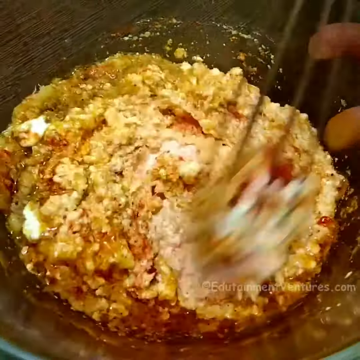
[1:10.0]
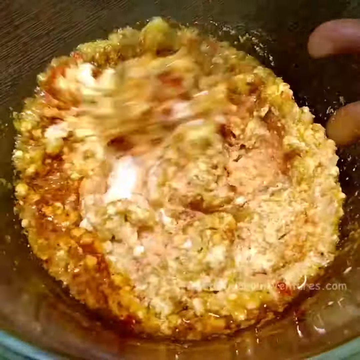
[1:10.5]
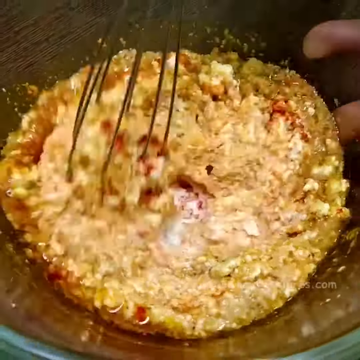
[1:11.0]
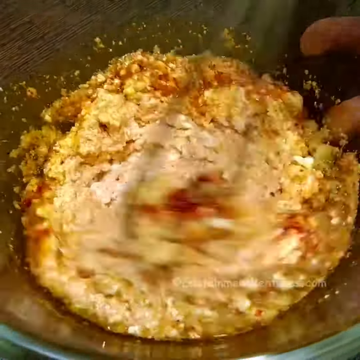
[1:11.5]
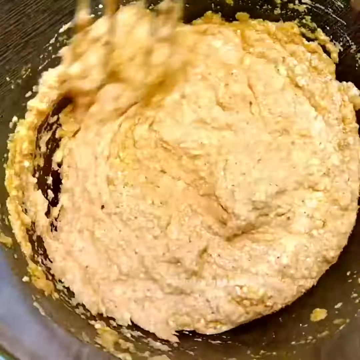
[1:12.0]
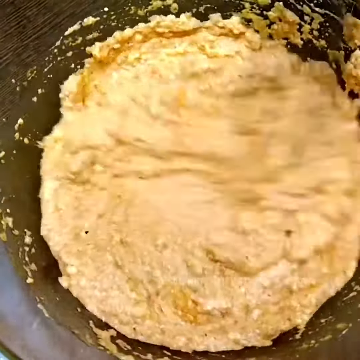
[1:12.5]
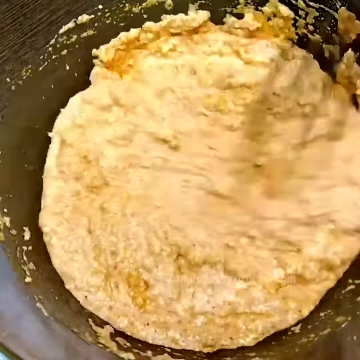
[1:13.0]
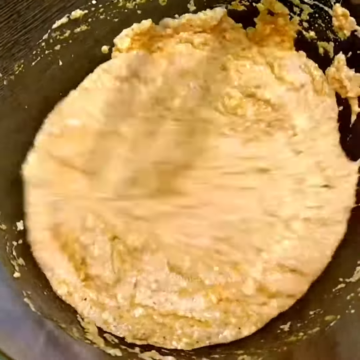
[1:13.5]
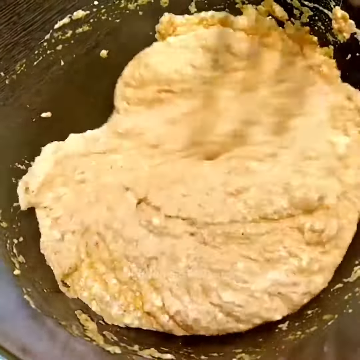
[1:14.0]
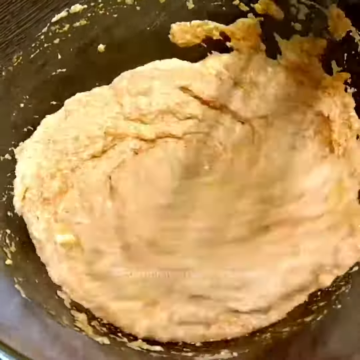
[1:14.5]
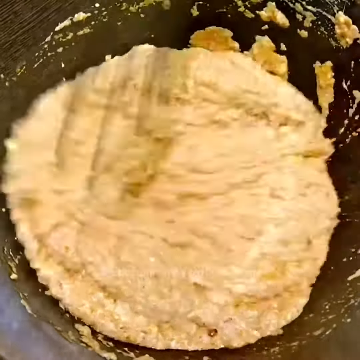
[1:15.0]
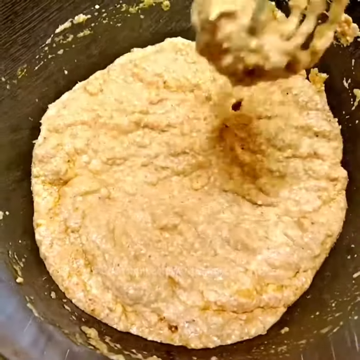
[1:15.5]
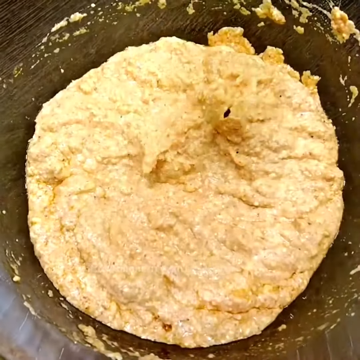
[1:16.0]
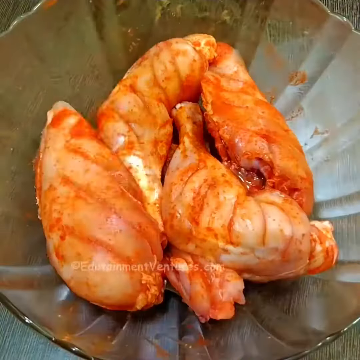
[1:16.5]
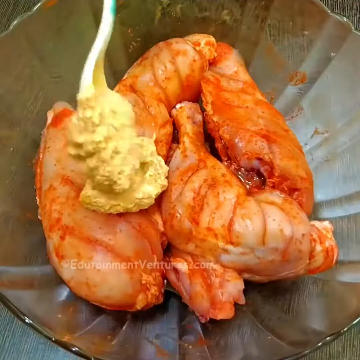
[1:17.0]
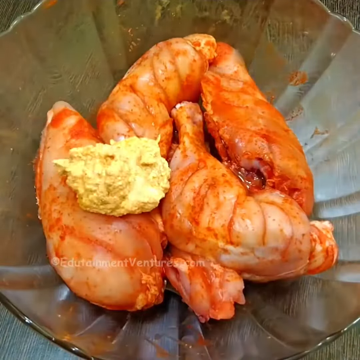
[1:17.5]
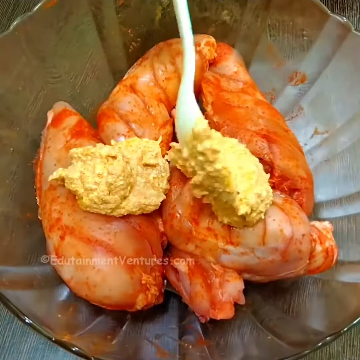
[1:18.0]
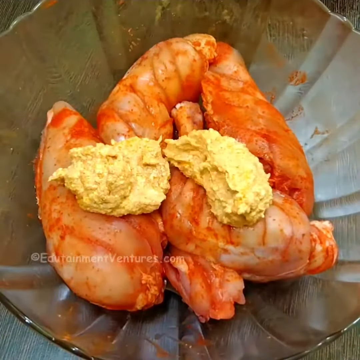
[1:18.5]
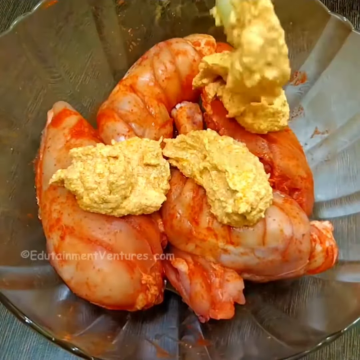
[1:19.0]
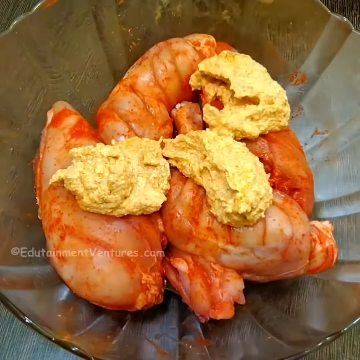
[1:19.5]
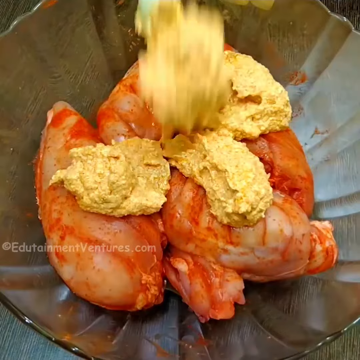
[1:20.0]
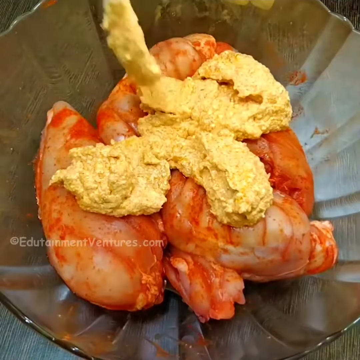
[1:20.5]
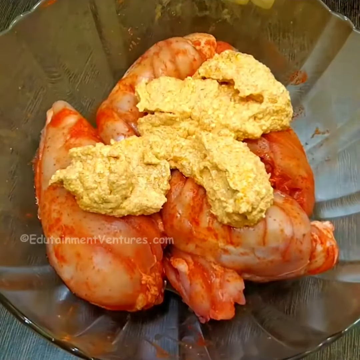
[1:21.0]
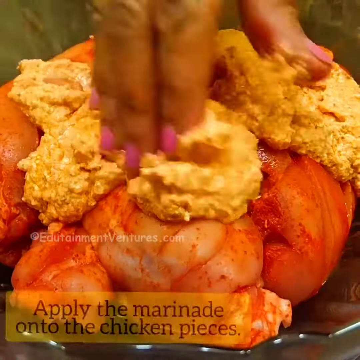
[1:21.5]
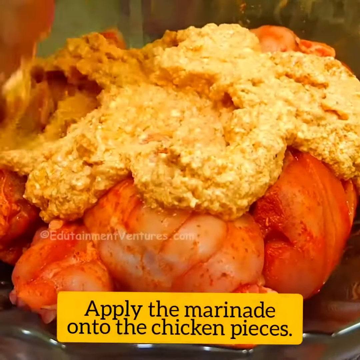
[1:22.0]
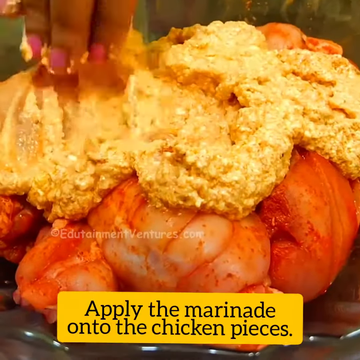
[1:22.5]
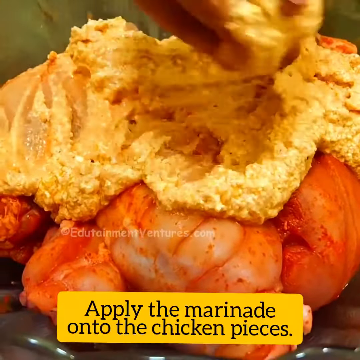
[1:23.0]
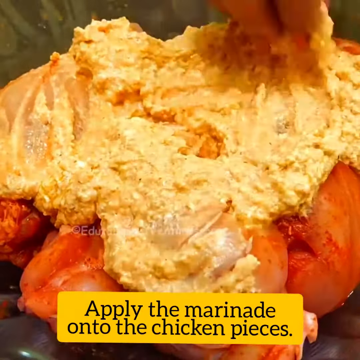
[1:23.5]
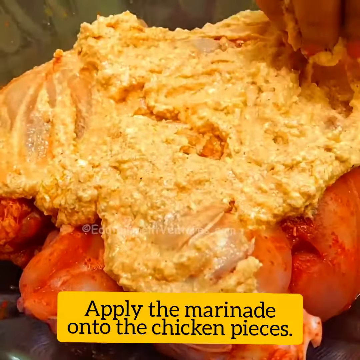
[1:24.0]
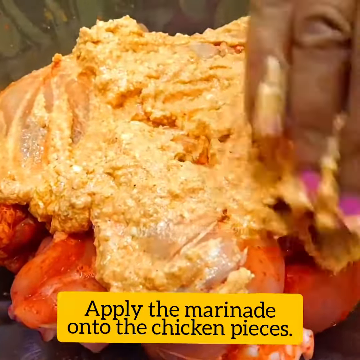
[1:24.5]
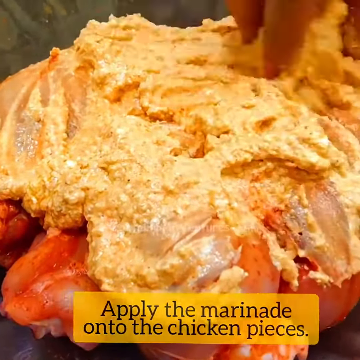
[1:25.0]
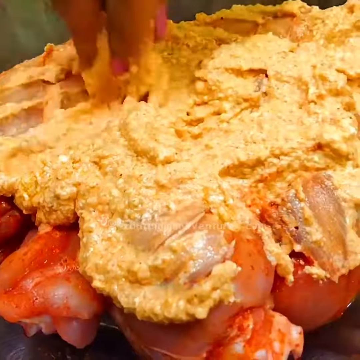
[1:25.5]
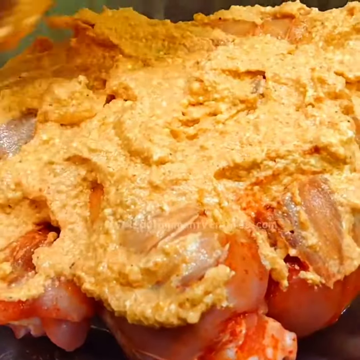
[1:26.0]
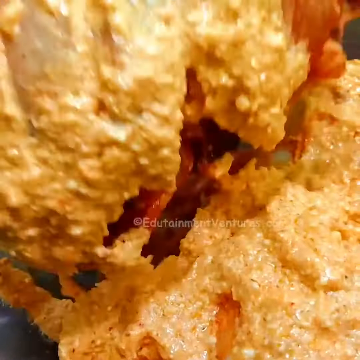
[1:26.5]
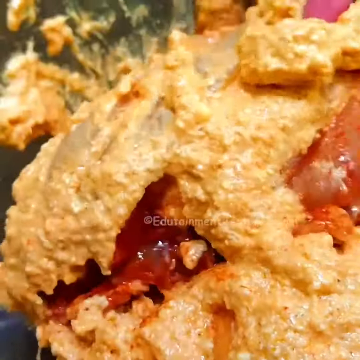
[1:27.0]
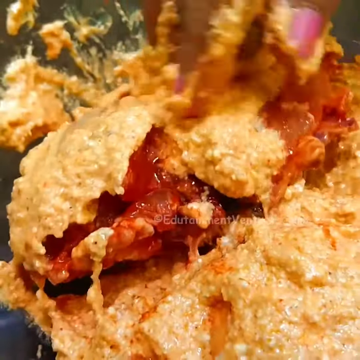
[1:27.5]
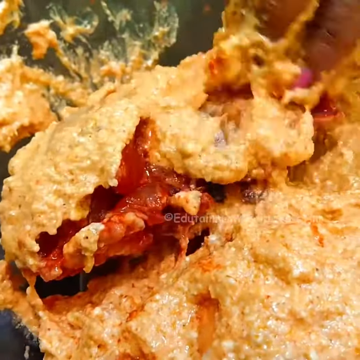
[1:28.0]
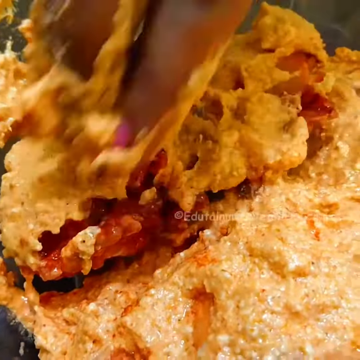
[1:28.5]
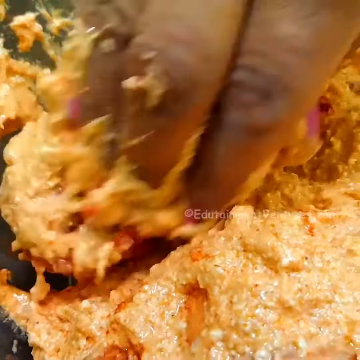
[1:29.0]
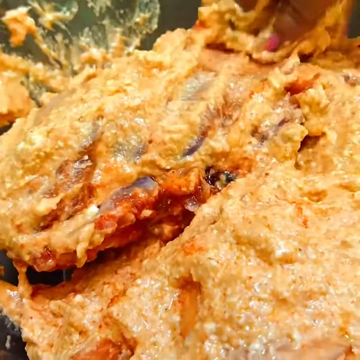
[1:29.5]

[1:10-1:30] A person with a whisk mixes the green mixture together. As it becomes more thoroughly mixed, it is less green and more white, with a thick consistency similar to whisked yogurt. In the next scene the mixture is scooped onto the chicken, which already has the red oil on it, in four scoops. Text at the bottom reads "apply the marinade onto the chicken pieces". Someone with bare hands and long pink fingernails rubs it onto the chicken, covering as much as possible, then picks up pieces one at a time to rub the backs of them with the marinade too. The yogurt marinade is still white.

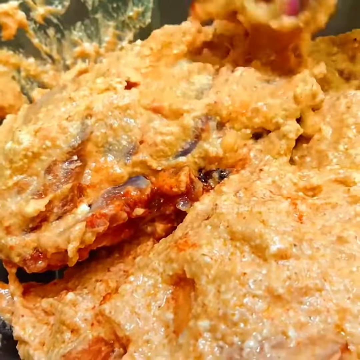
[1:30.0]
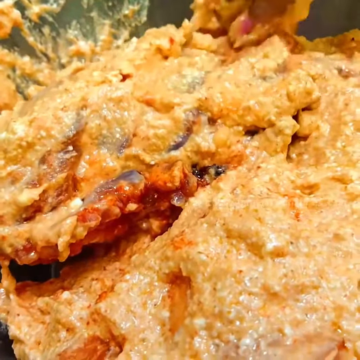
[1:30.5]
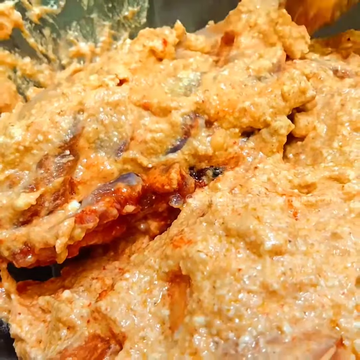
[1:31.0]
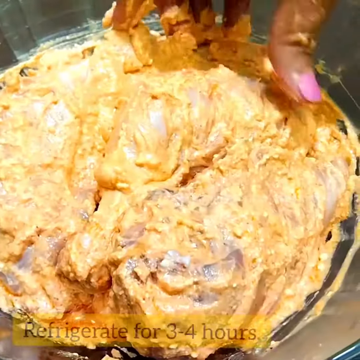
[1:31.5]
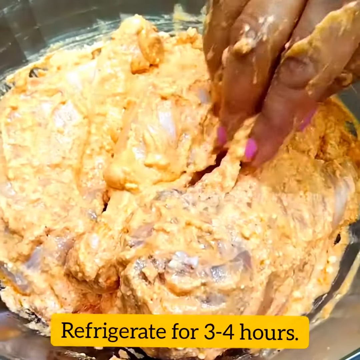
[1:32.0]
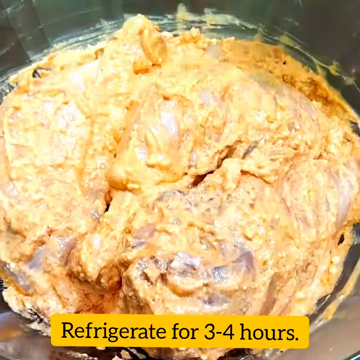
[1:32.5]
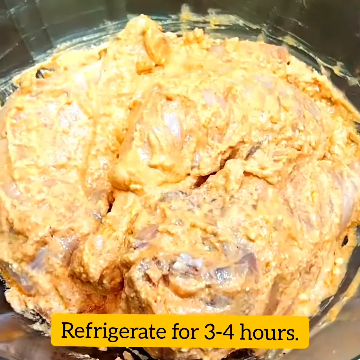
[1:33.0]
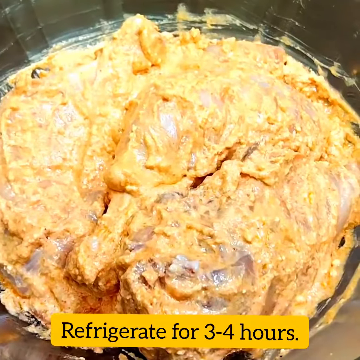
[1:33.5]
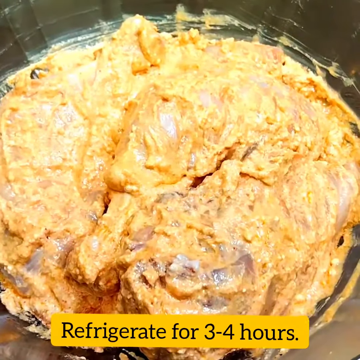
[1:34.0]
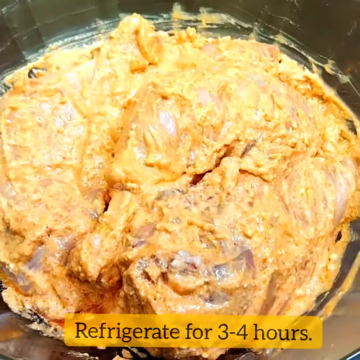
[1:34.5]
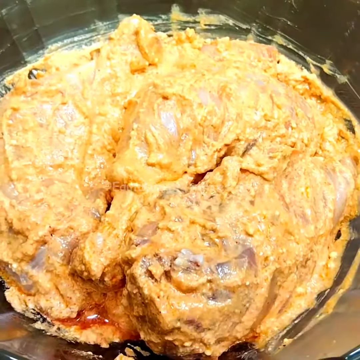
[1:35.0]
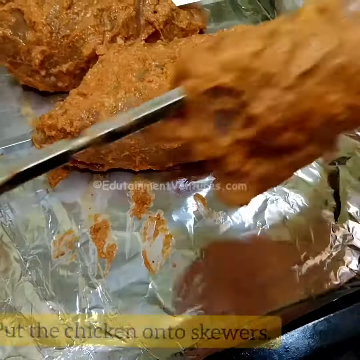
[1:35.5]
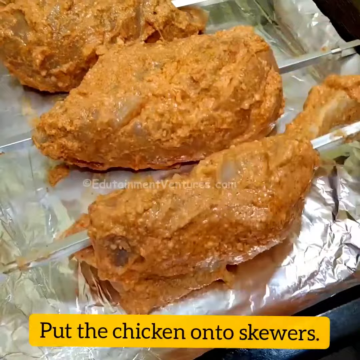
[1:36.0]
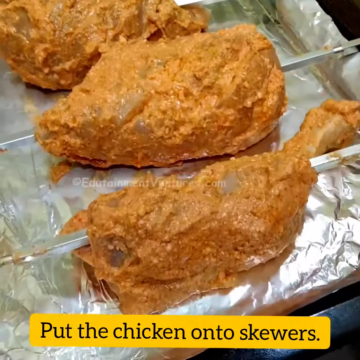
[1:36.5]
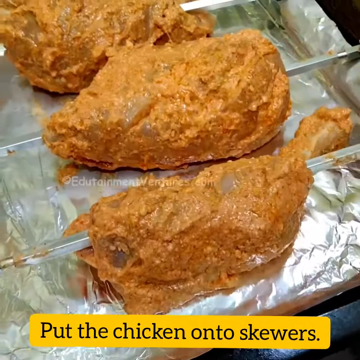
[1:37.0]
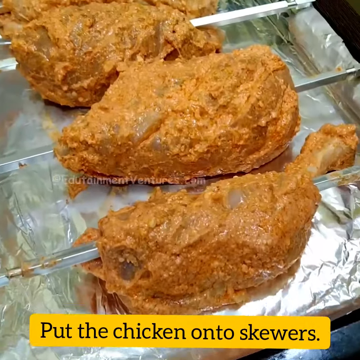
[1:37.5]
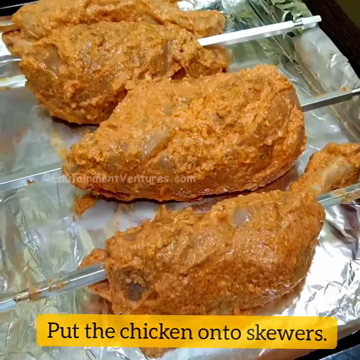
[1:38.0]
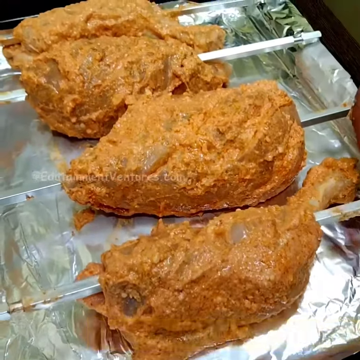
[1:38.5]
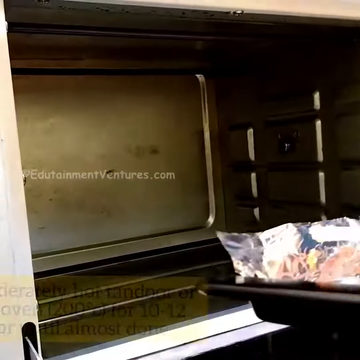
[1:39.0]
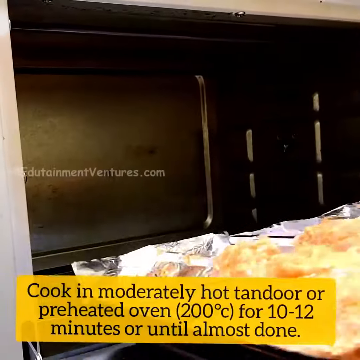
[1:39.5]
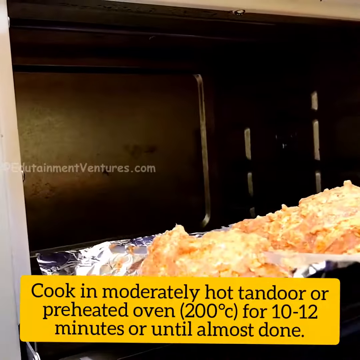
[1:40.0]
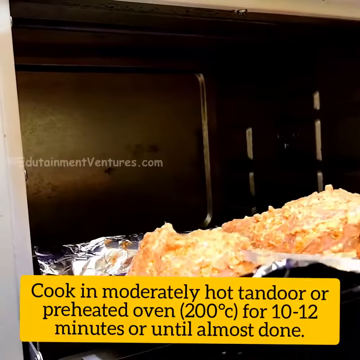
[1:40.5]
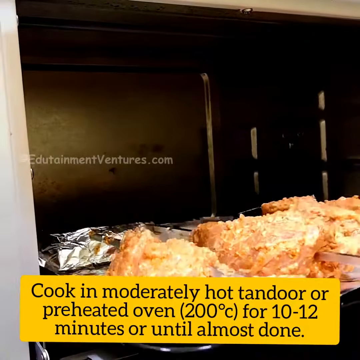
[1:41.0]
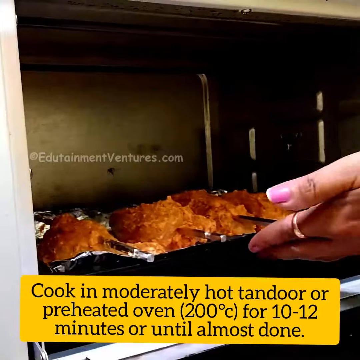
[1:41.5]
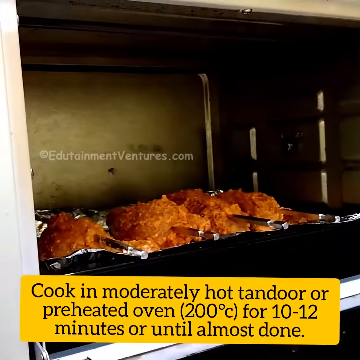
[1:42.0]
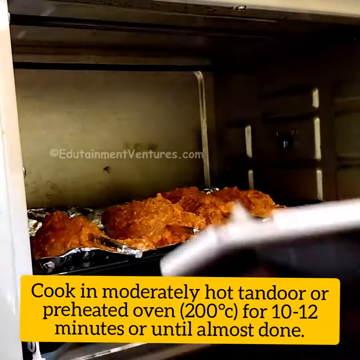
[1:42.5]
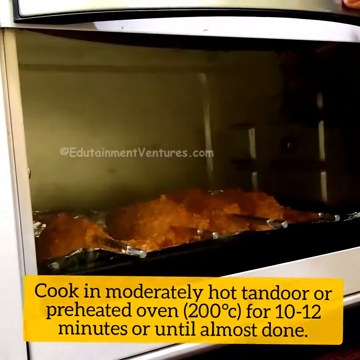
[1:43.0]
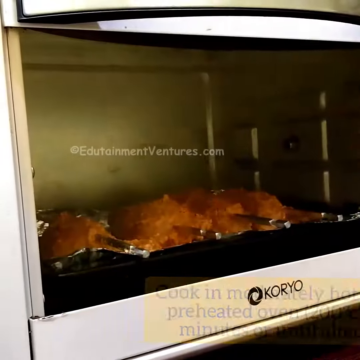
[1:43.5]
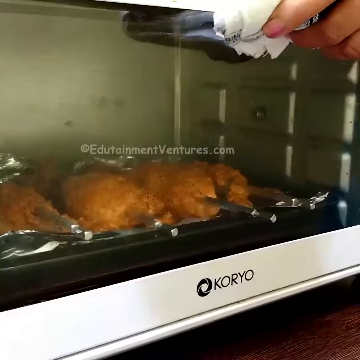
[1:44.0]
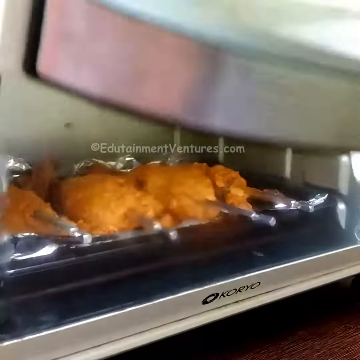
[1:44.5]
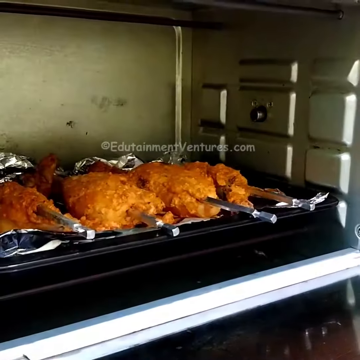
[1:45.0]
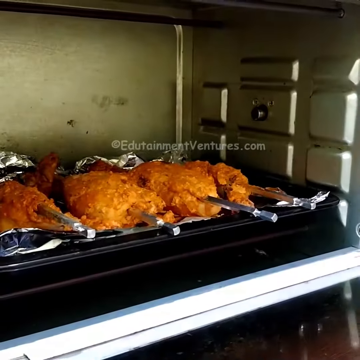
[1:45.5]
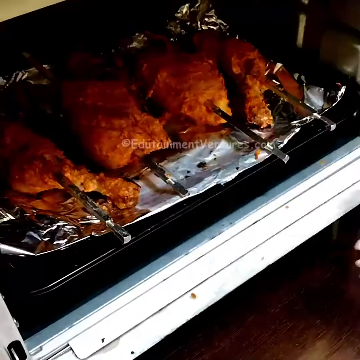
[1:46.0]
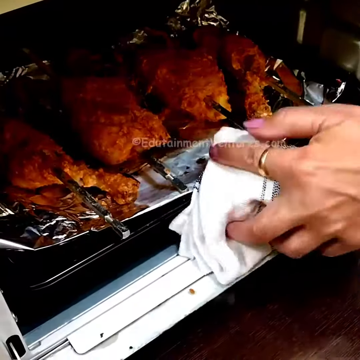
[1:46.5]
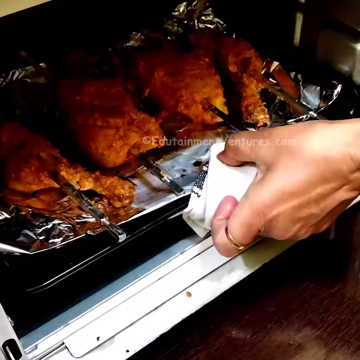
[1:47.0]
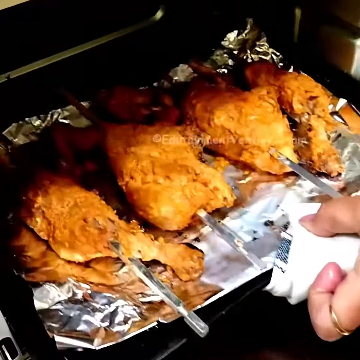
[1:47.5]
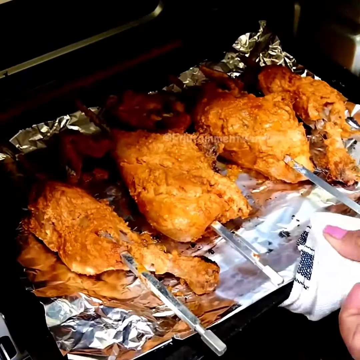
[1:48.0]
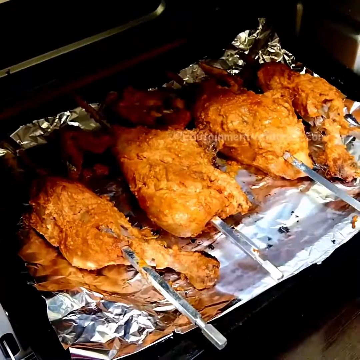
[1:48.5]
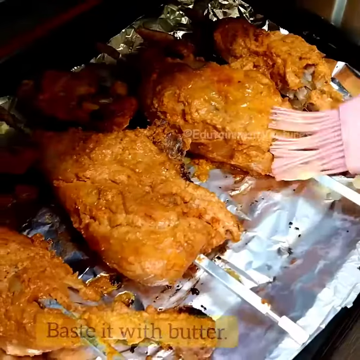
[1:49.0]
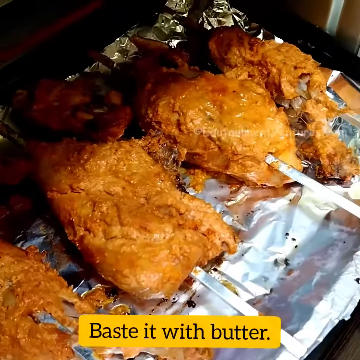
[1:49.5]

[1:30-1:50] The same person finishes rubbing the marinade onto the chicken with bare hands. Text at the bottom reads "refrigerate for three to four hours", and the bowl is apparently placed into the fridge. Next the text reads "put the chicken onto skewers". Each piece of chicken is placed on one metal skewer, and the skewers are placed on a tray lined with aluminum foil, which then goes into an oven. Text at the bottom gives oven instructions, including "200 degrees Celsius for 10 to 12 minutes or until almost done". The chicken goes into the oven and the oven door is closed. The video skips forward, and the chicken is removed, appearing slightly done; it is bubbling on top and looks very hot. The text then says "baste with oil", and someone puts oil onto the chicken, basting it. It is still on the foil-lined tray.